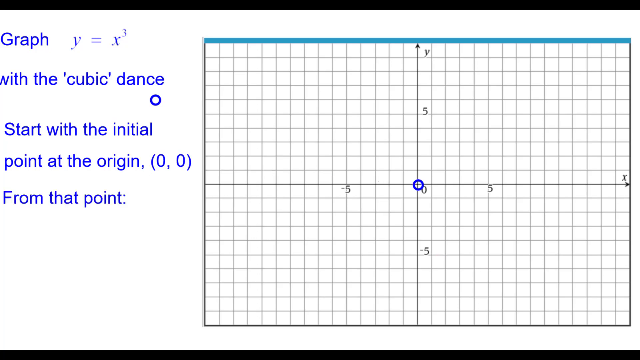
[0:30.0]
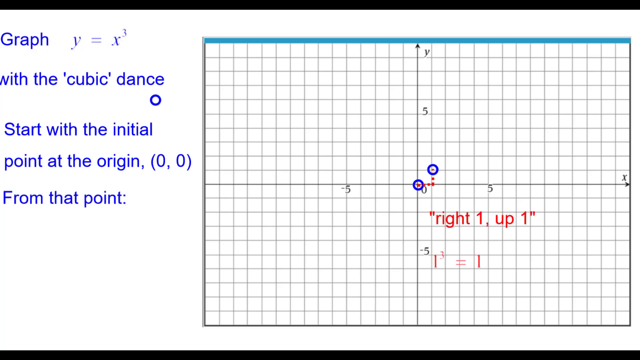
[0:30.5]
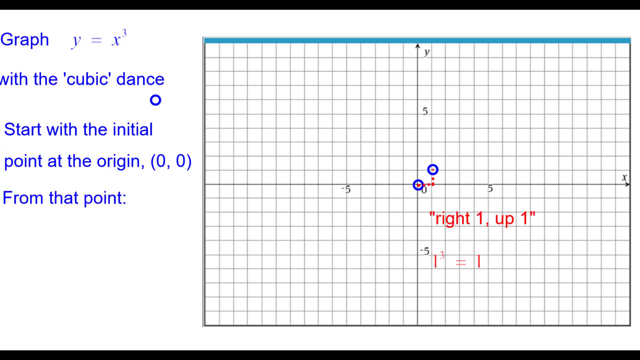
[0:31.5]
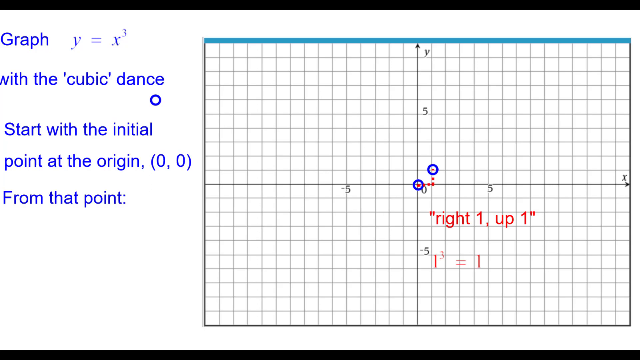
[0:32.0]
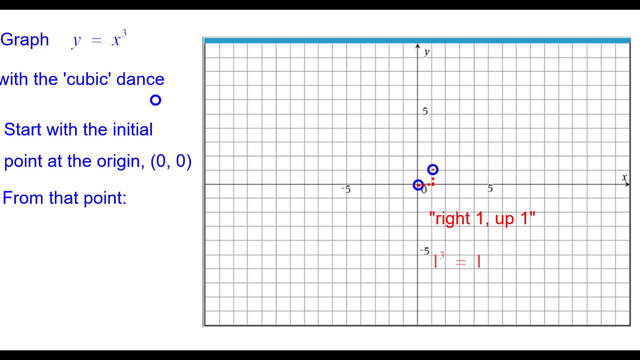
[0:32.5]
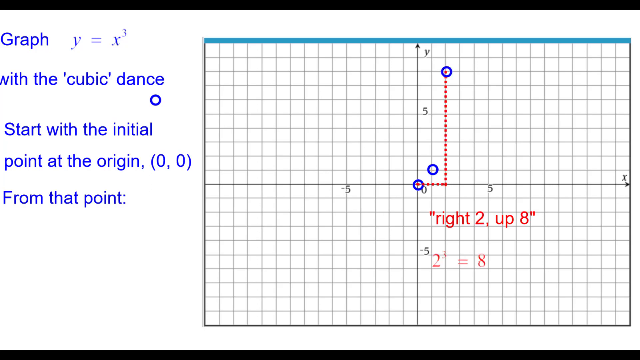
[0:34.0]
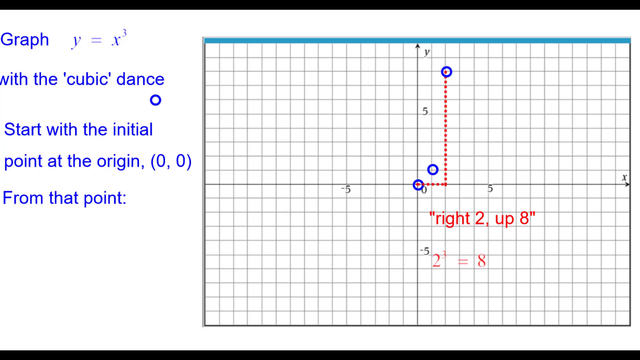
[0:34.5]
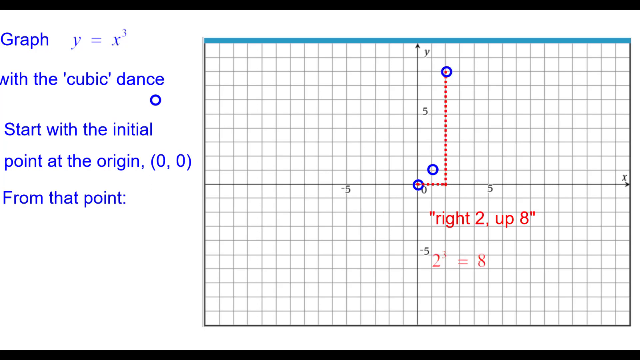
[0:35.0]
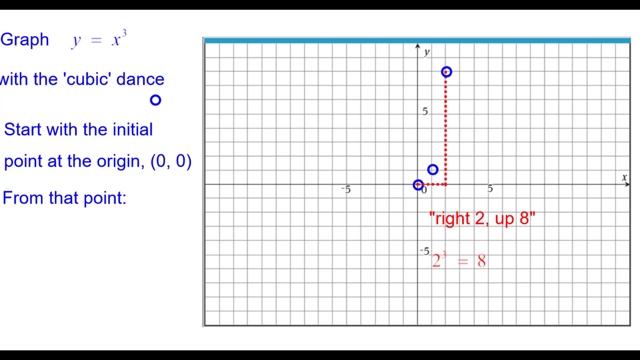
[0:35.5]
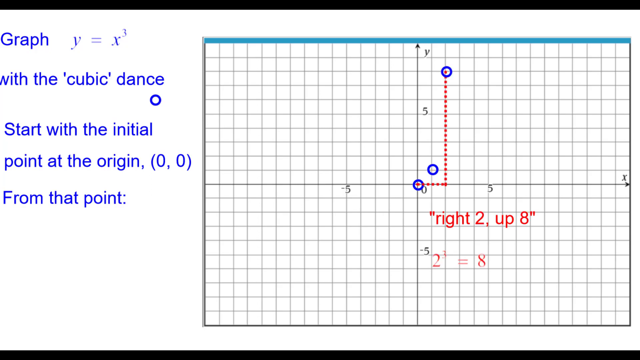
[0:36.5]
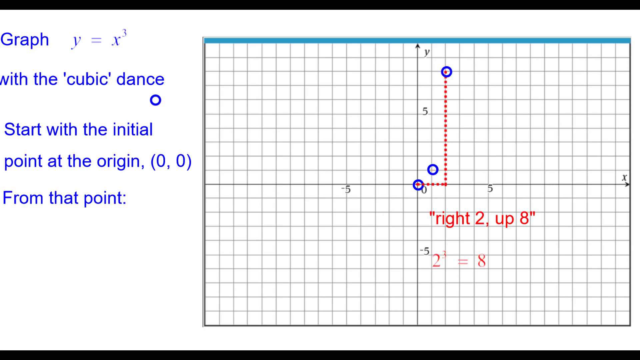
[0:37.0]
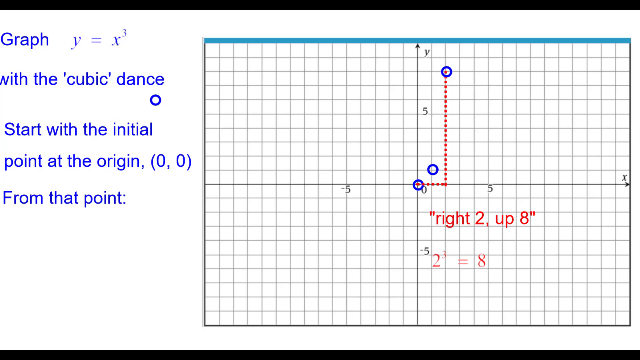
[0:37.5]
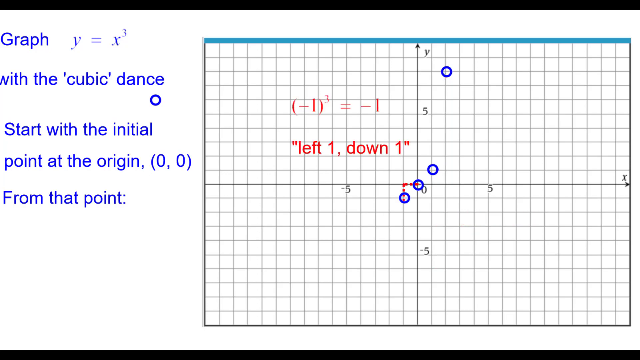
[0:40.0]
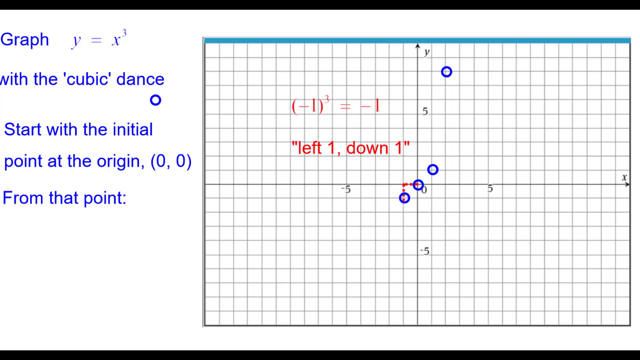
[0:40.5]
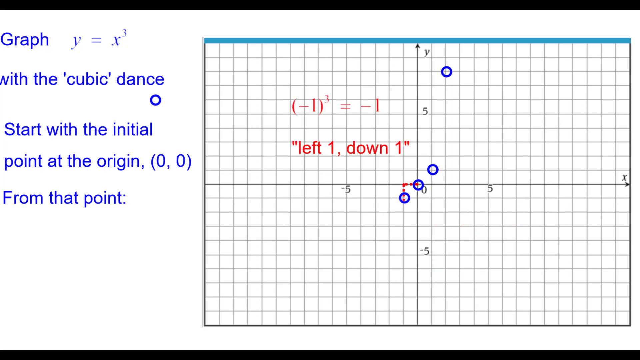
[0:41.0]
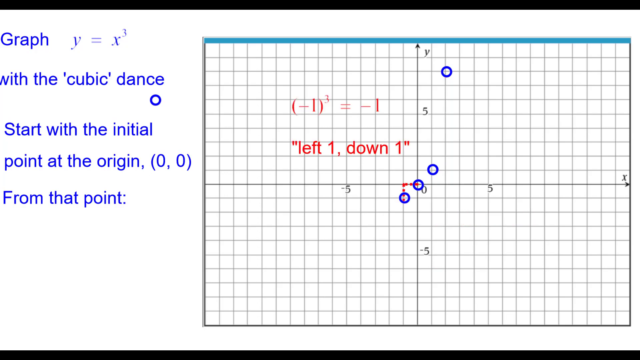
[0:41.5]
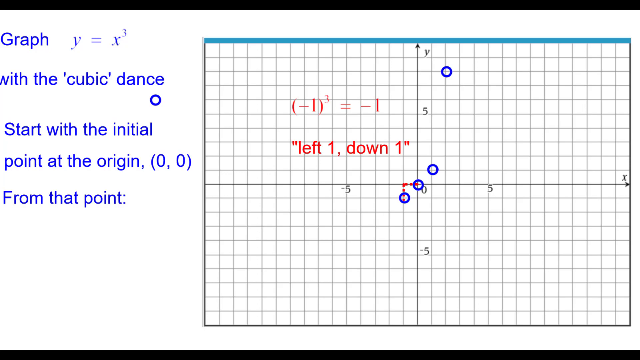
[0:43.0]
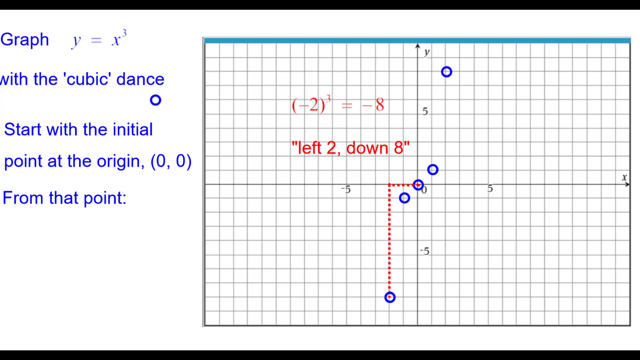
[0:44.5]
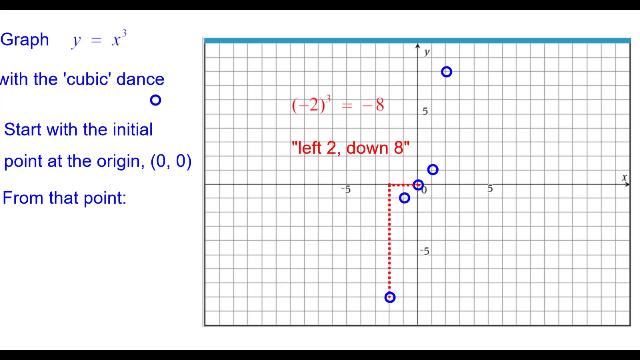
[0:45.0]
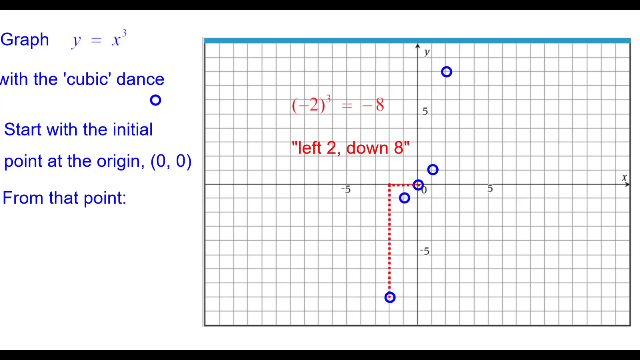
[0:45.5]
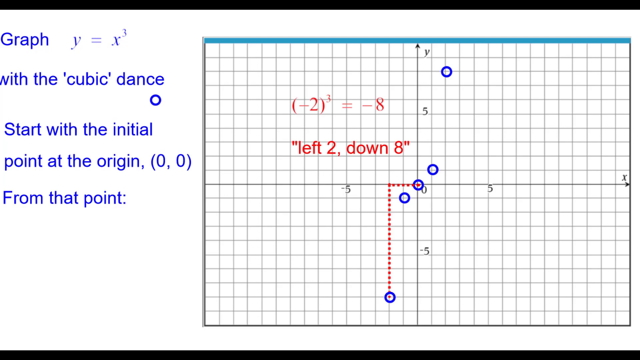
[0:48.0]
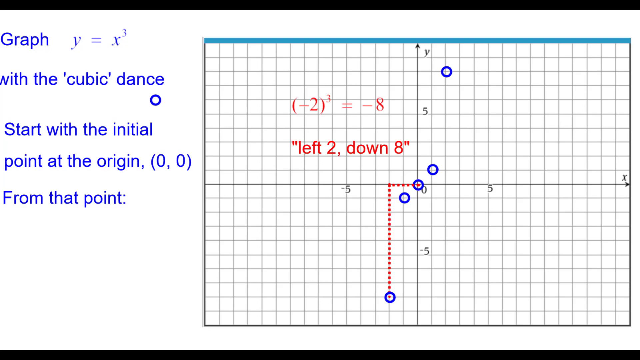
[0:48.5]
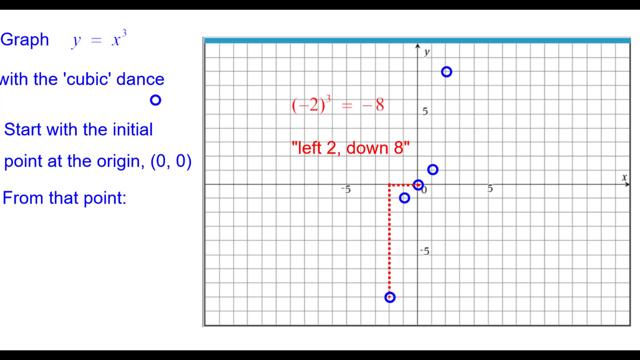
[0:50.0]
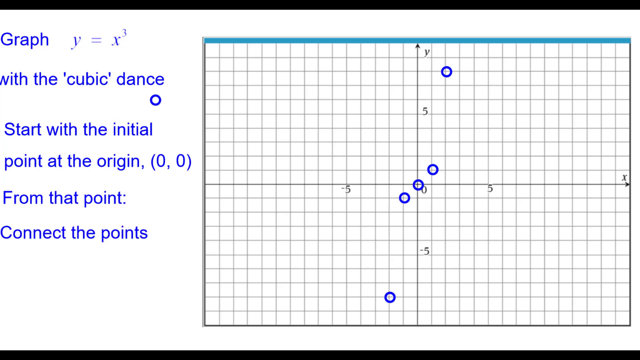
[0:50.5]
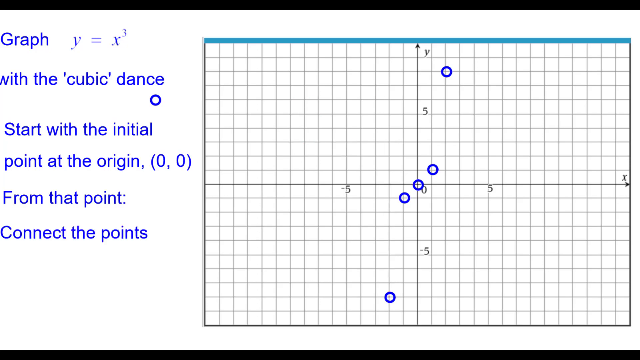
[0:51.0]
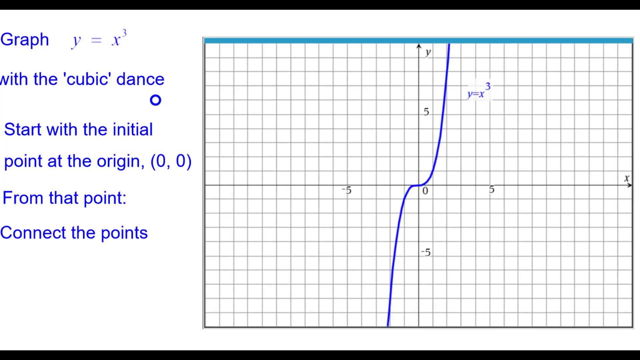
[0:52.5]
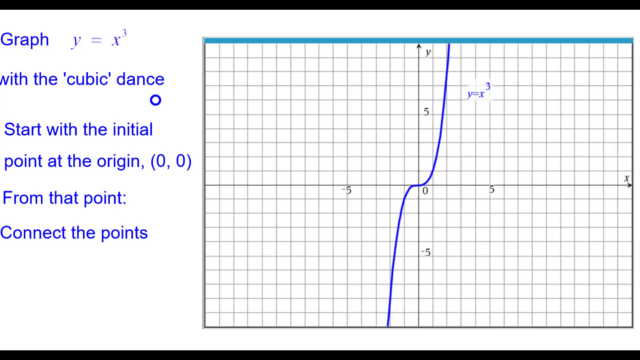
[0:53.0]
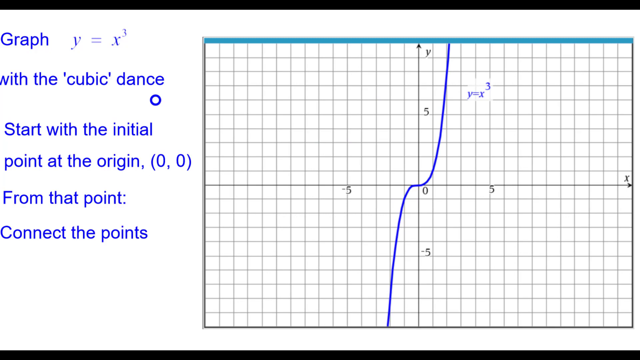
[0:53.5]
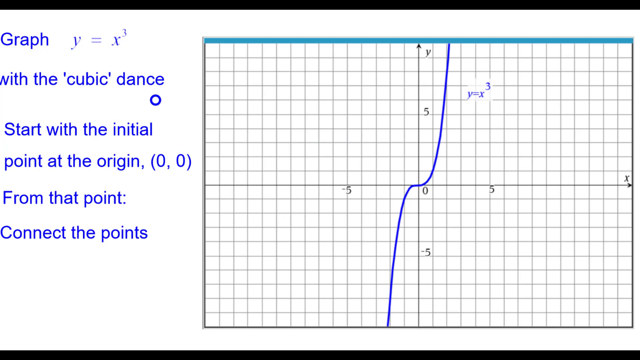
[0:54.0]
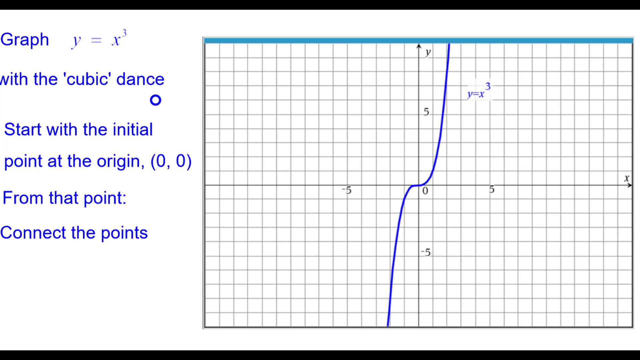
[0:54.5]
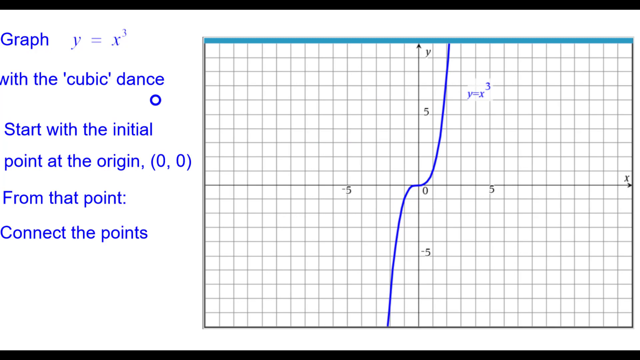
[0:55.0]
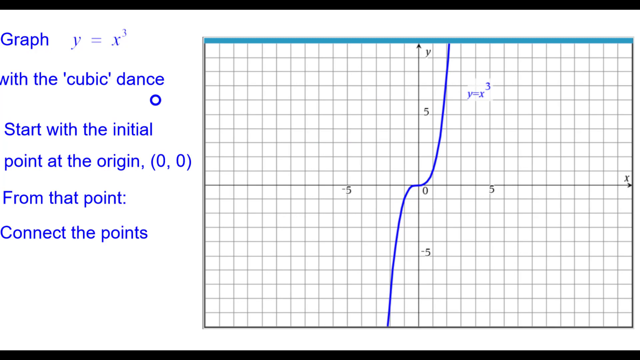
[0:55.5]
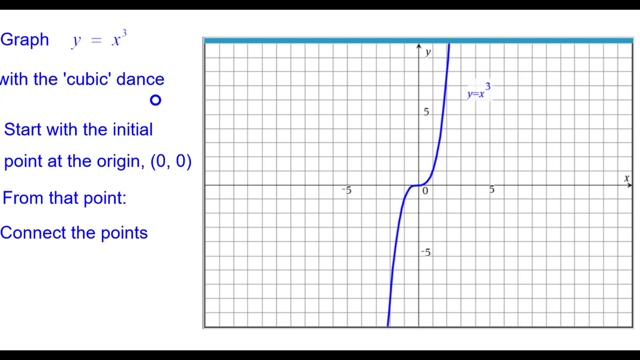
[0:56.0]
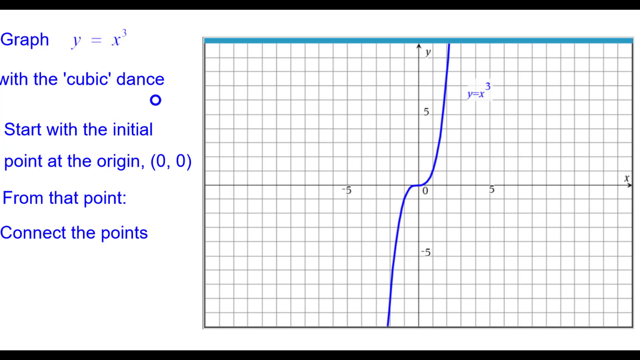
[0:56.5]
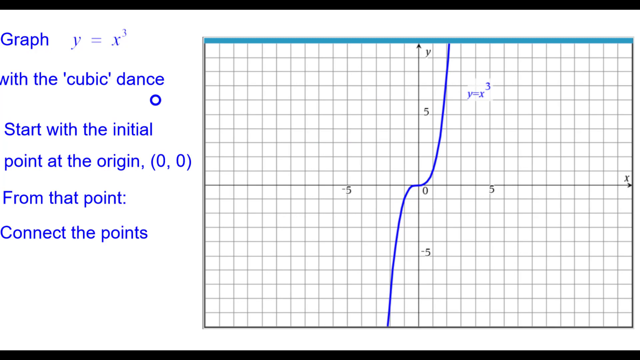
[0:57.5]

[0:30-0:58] The graph table is still shown, with additional text now on the left that starts "from that point" followed by a colon. On the graph paper, two blue circles, kind of, appear, apparently at the center and in the upper right quadrant. Underneath, in the lower right quadrant, text reads "right one, up one." More elements then appear: some dots almost form a 90-degree angle in the upper right quadrant. The text in the lower right quadrant disappears, and in the upper left quadrant some kind of algebraic equation appears, along with text that says "left one, left down one." Red dots again form something like a 90-degree angle. At the end, kind of a blue line starts at the top of the upper right quadrant, makes its way down to roughly the zero where the Y and X axes meet, and continues down into the lower left quadrant.